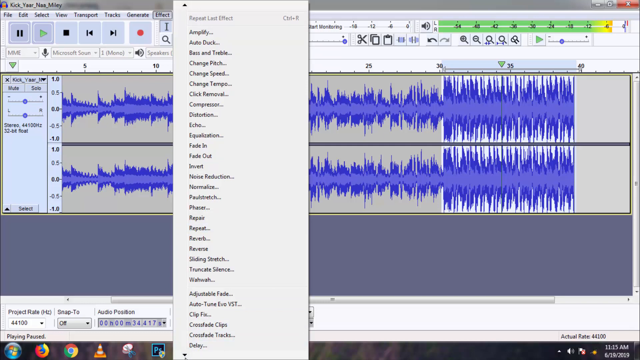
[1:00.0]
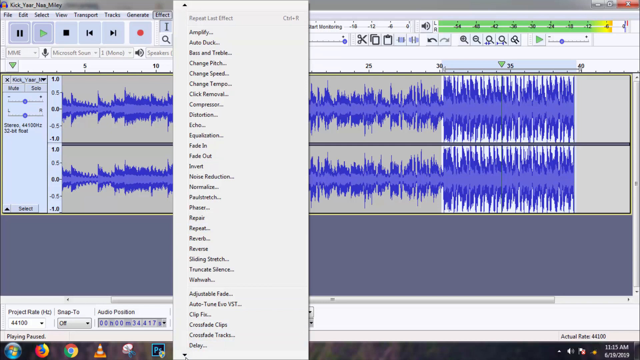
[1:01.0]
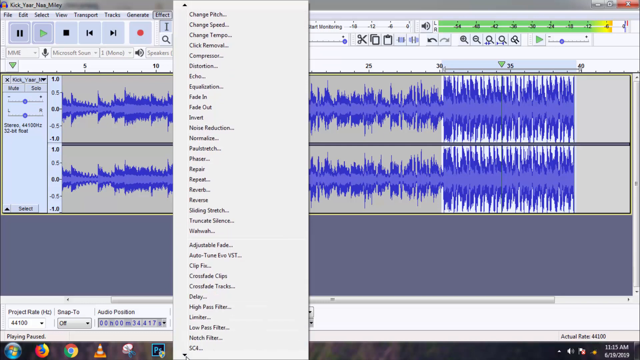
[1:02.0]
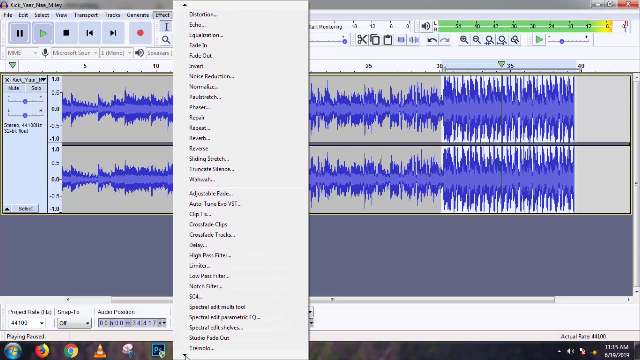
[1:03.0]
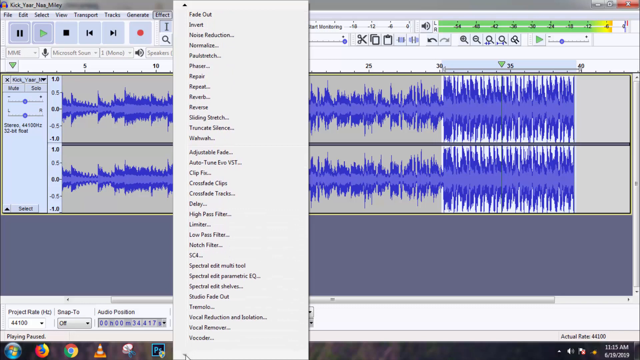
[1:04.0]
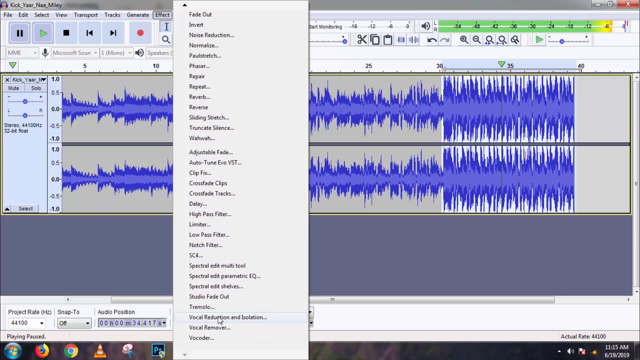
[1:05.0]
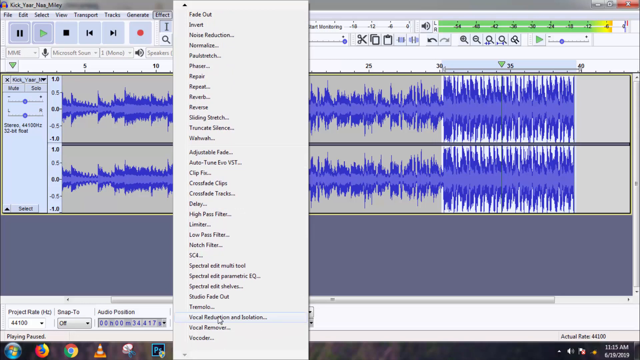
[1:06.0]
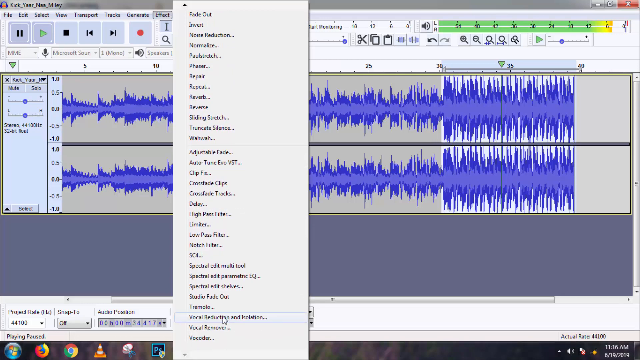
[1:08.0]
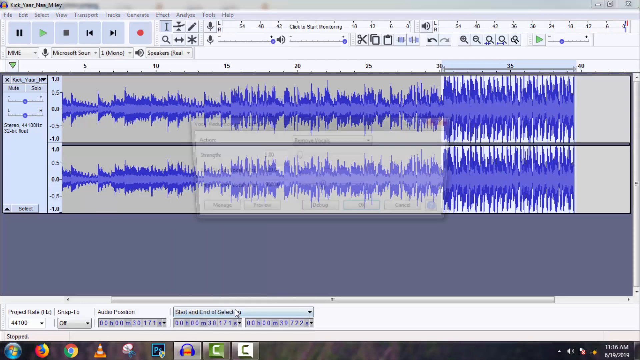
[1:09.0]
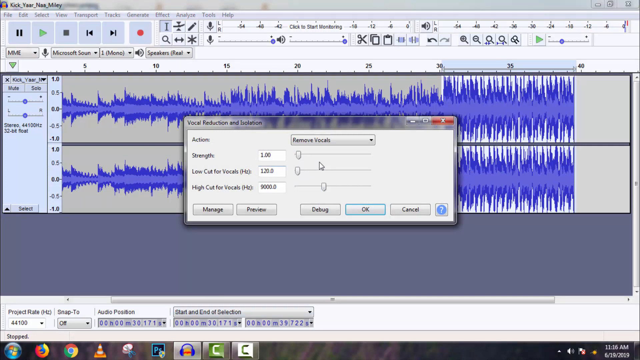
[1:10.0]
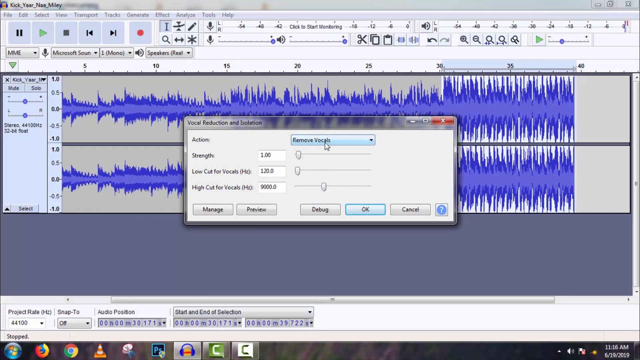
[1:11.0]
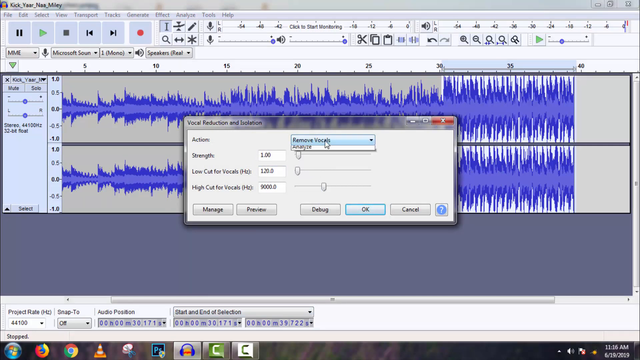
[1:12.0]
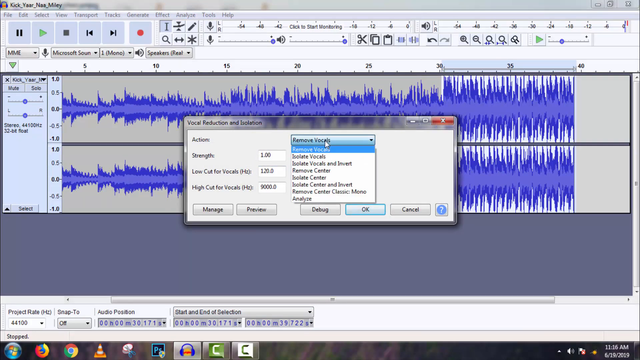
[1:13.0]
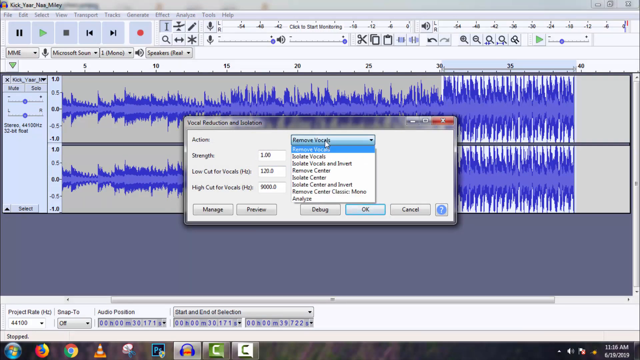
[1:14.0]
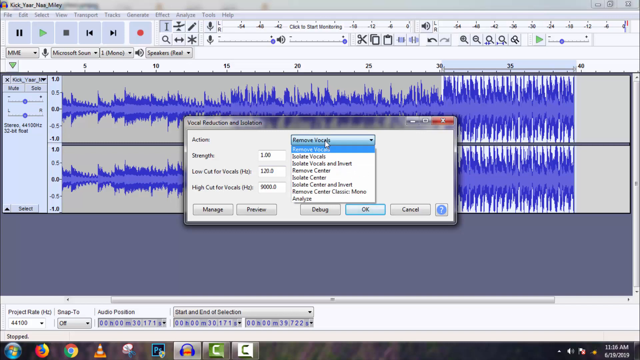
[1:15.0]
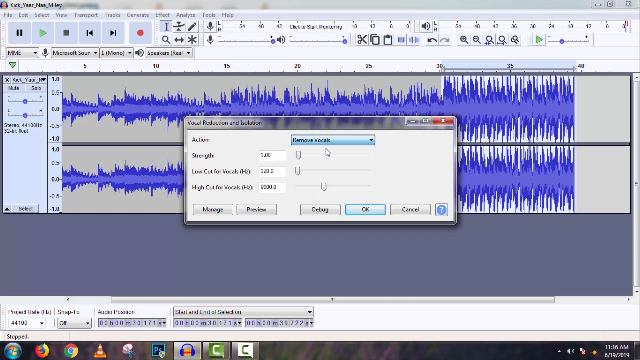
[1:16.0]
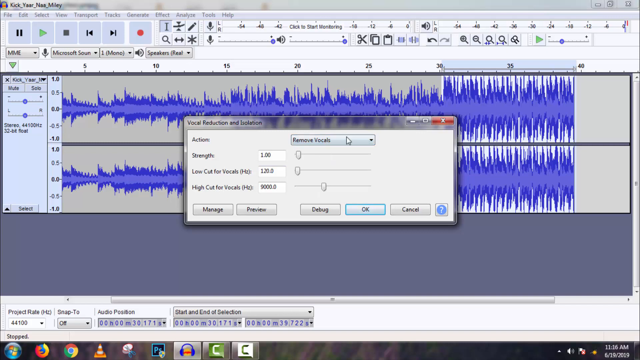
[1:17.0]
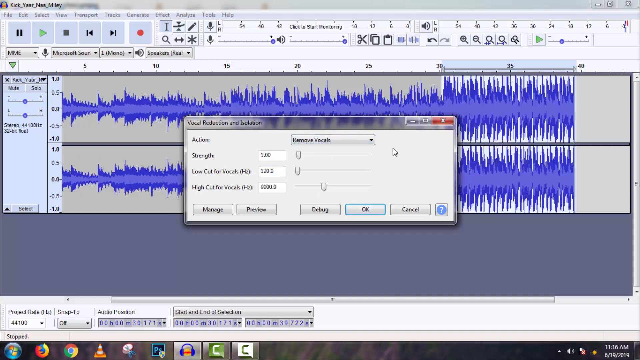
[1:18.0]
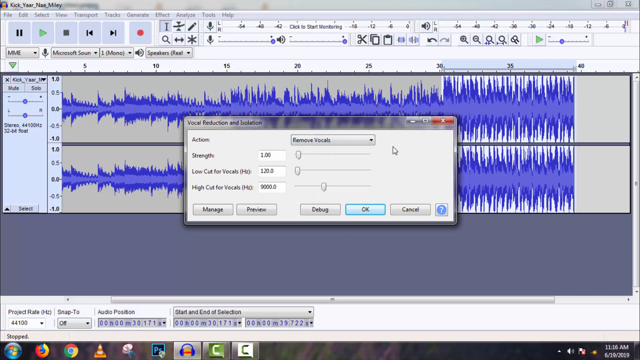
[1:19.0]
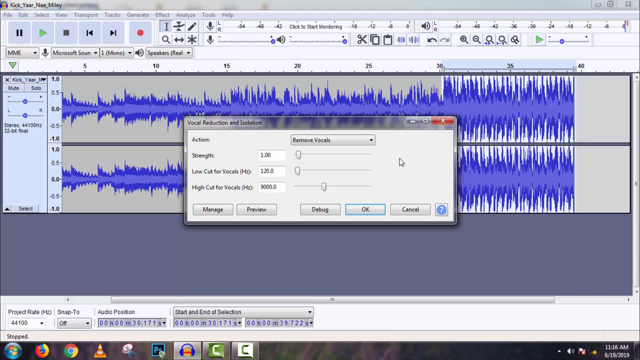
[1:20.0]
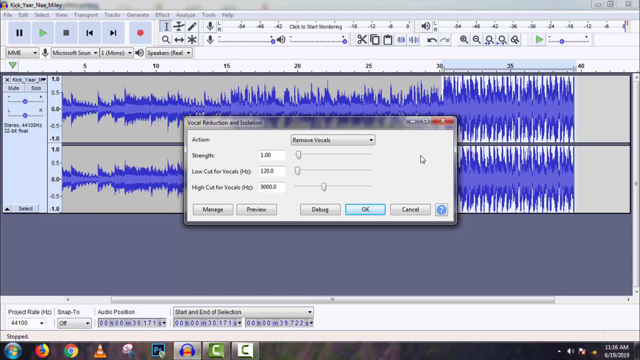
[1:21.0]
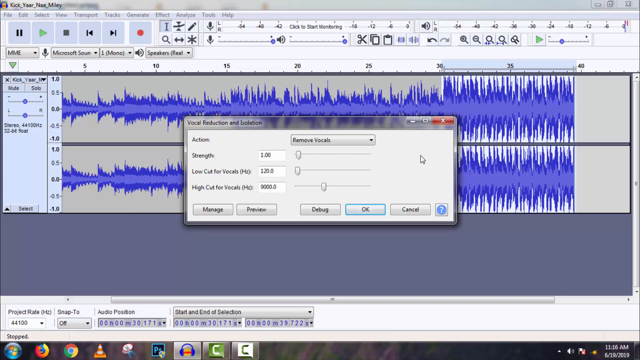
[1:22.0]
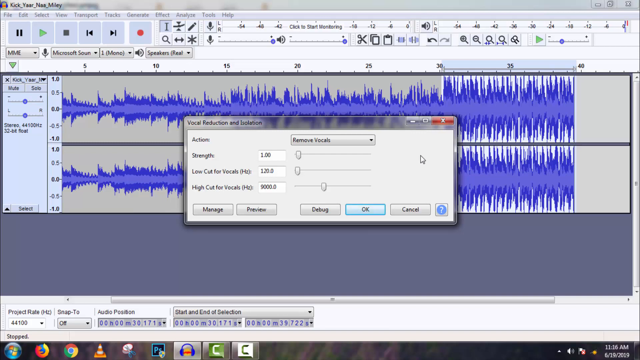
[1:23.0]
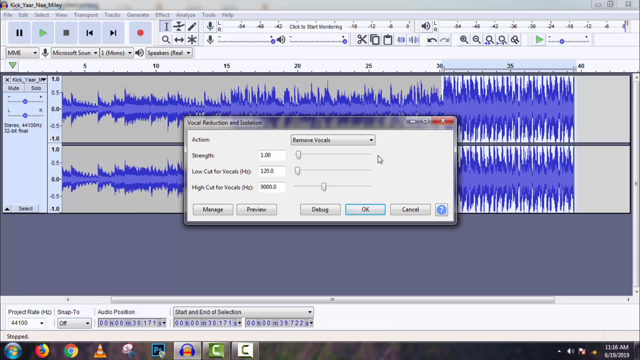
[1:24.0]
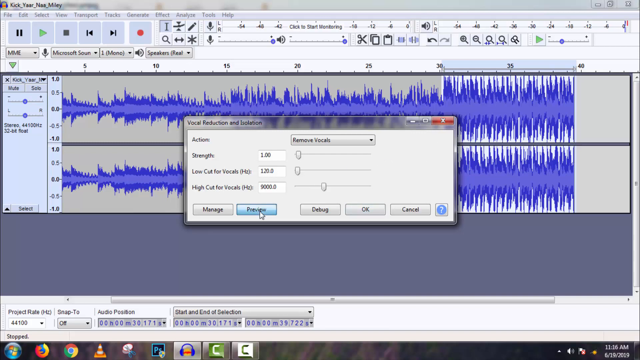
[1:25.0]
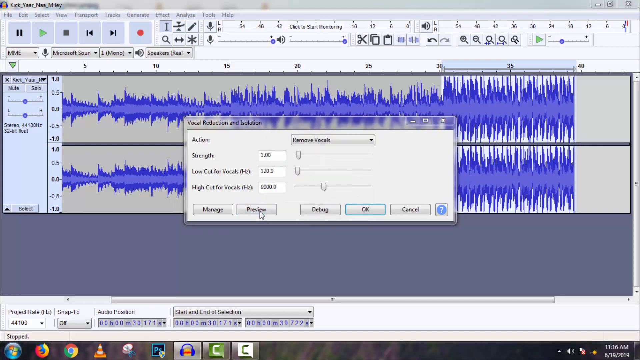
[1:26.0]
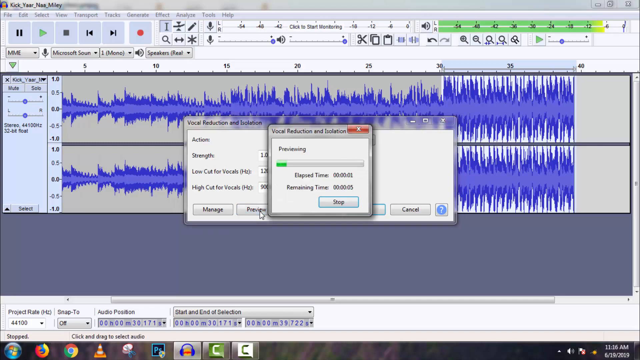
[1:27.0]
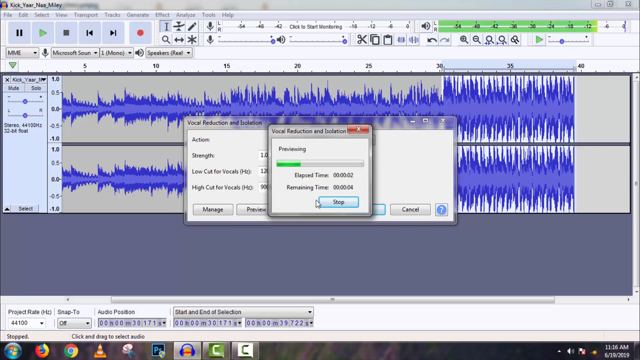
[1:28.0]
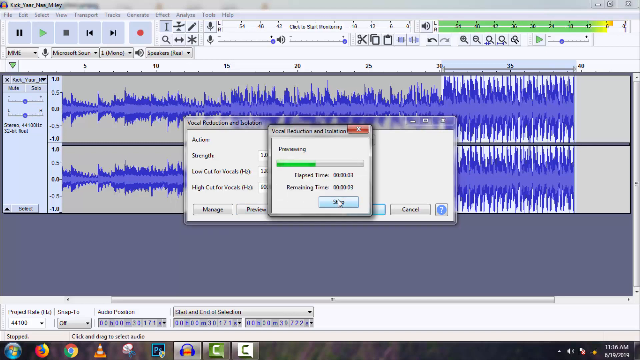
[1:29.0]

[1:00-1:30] Menu options are being gone through, and vocal reduction and isolation is selected. Under it, a drop-down menu for the action says "remove vocals", highlighted in a faint baby blue while the other words are in black. The strength is at 1.00, the low cut for vocals looks to be 1.20, and the high cut for vocals is 9,000.0. There are options to manage or preview; the person clicks preview, and a message shows that the preview is being prepared, with a green bar moving across to show progress along with the elapsed time and remaining time. A bar at the top blinks as the sound waves pass through, seemingly showing their strength as the music plays.